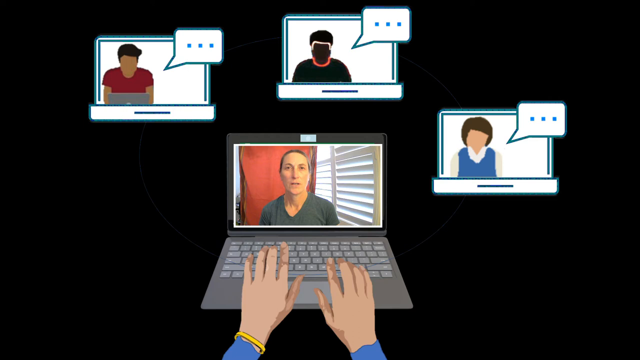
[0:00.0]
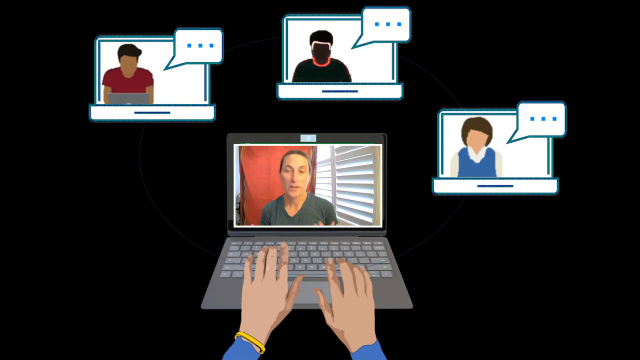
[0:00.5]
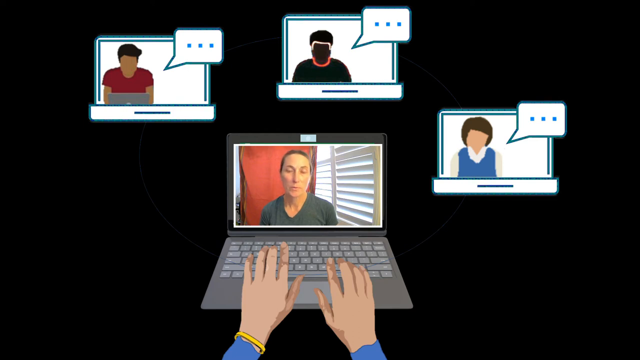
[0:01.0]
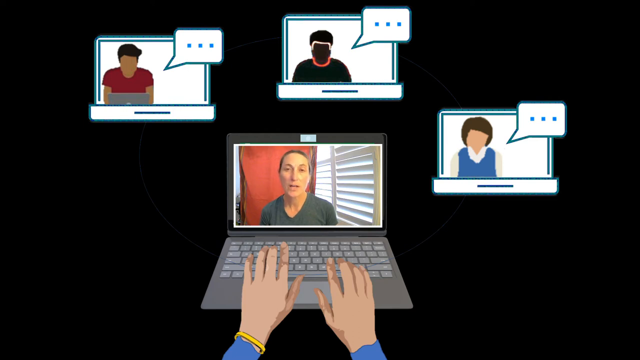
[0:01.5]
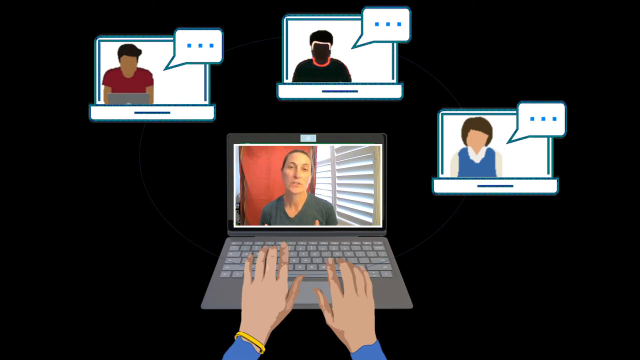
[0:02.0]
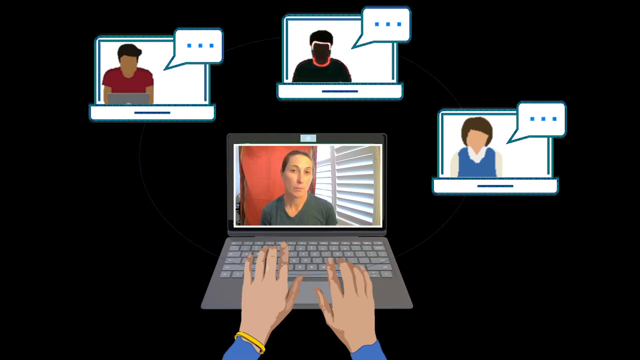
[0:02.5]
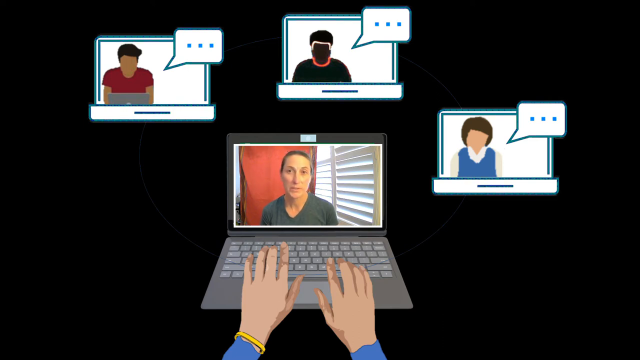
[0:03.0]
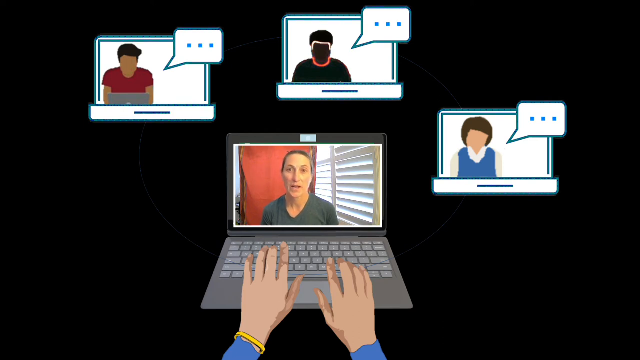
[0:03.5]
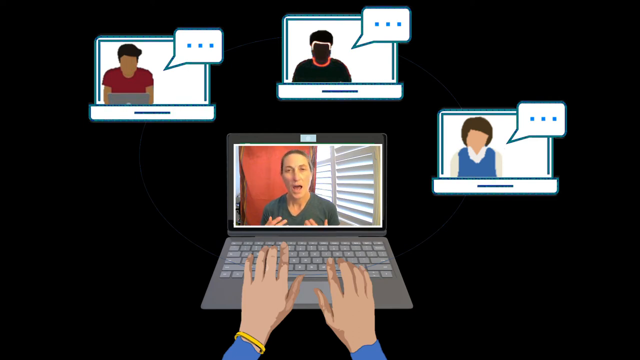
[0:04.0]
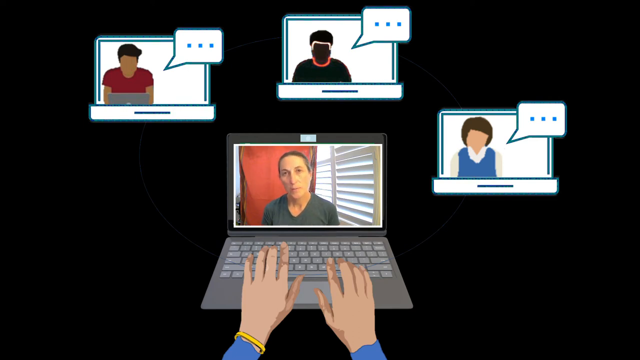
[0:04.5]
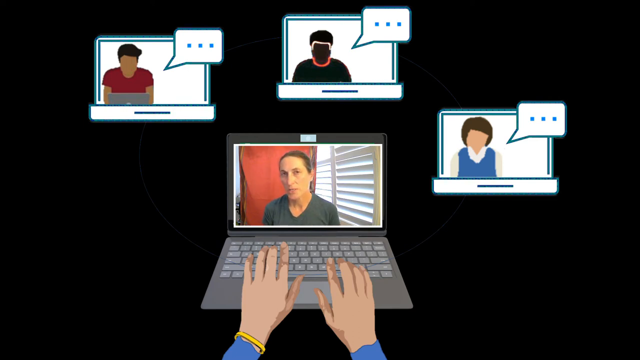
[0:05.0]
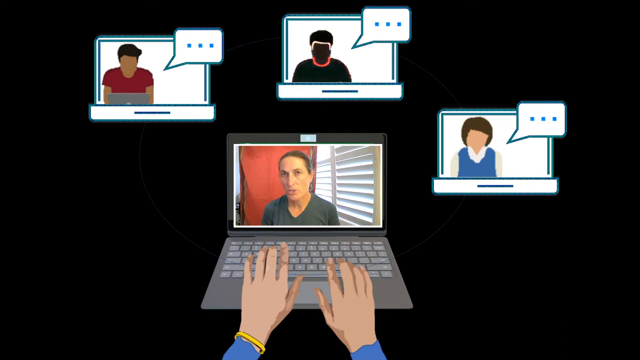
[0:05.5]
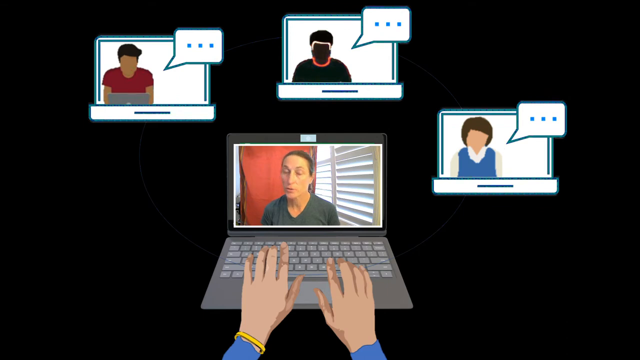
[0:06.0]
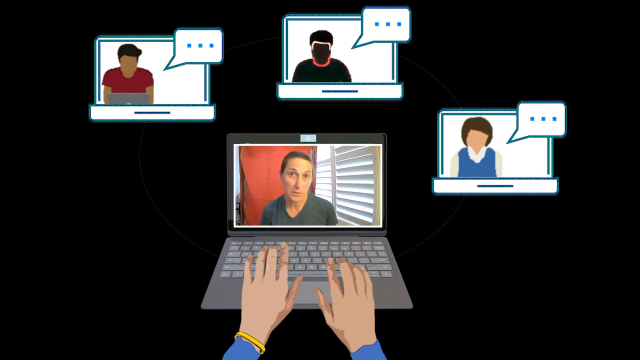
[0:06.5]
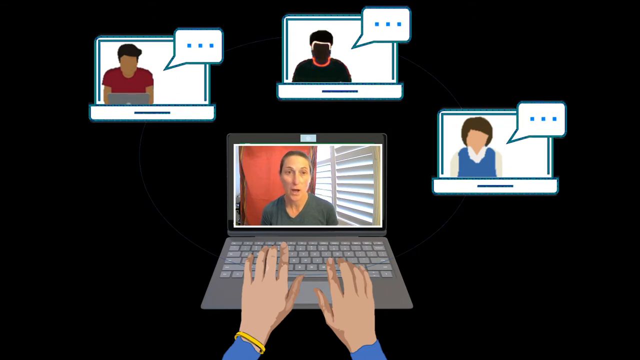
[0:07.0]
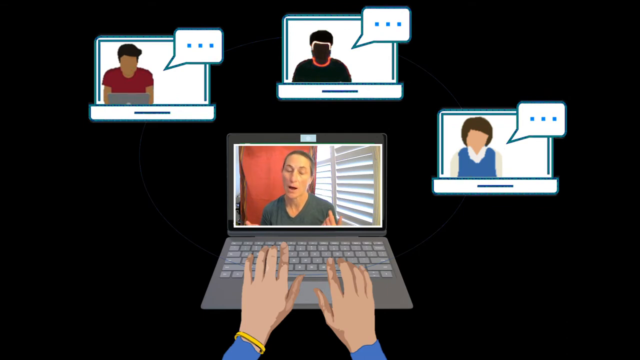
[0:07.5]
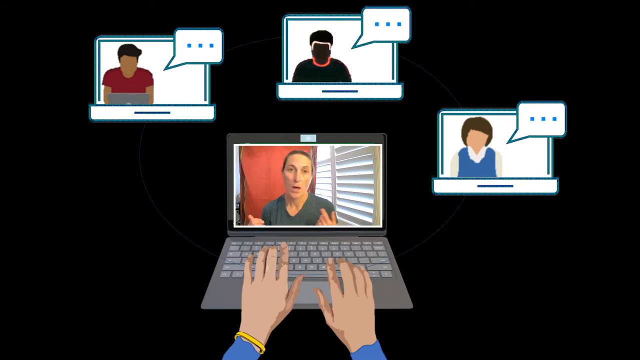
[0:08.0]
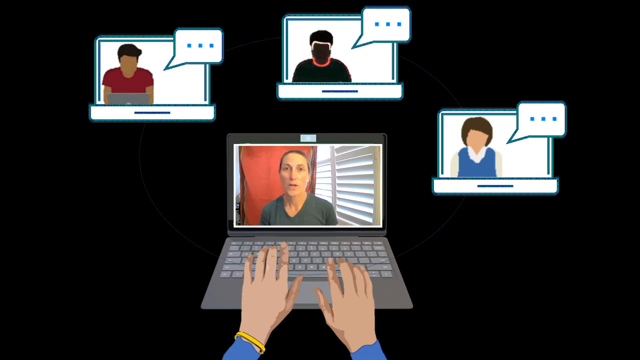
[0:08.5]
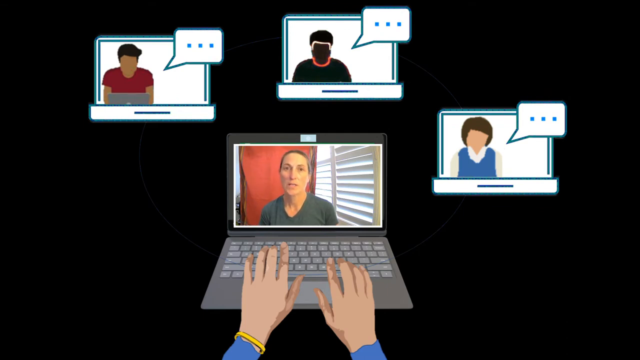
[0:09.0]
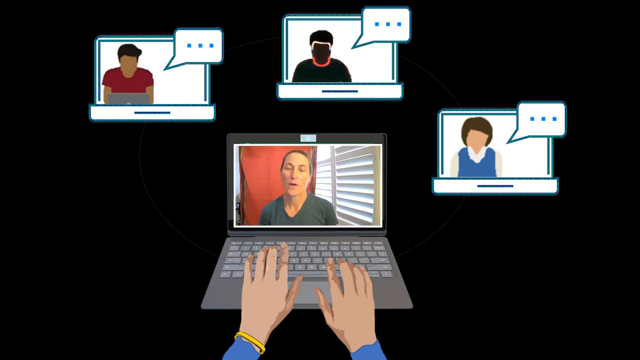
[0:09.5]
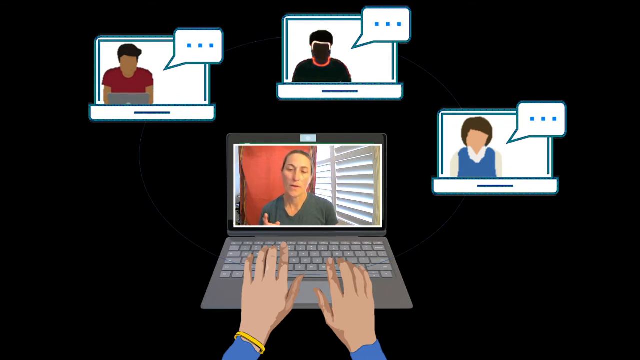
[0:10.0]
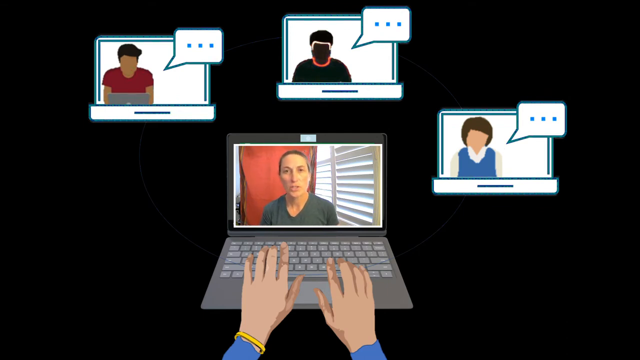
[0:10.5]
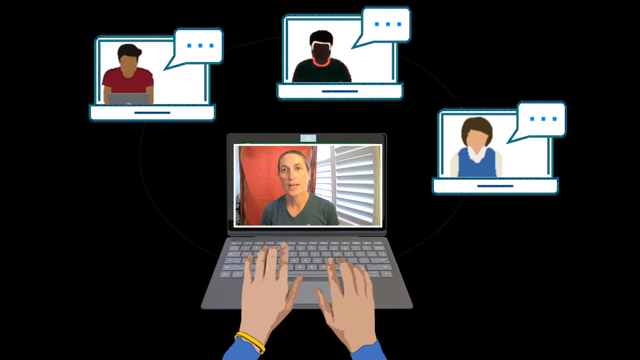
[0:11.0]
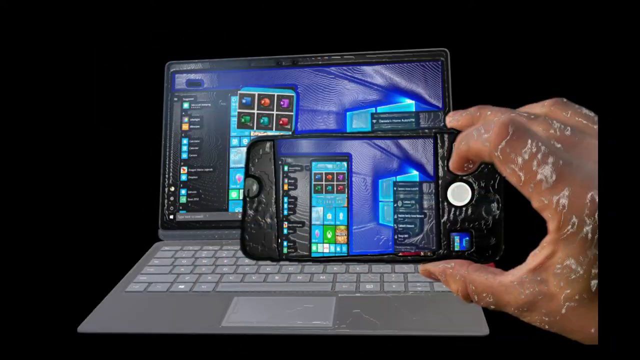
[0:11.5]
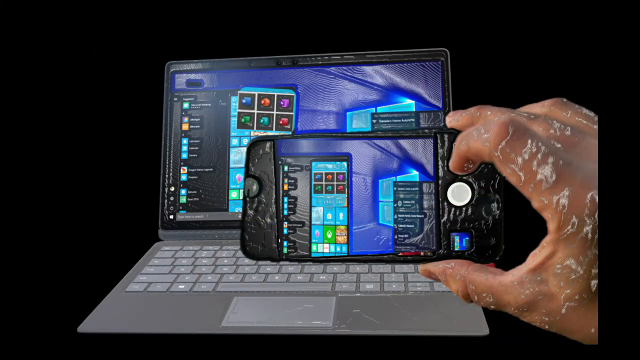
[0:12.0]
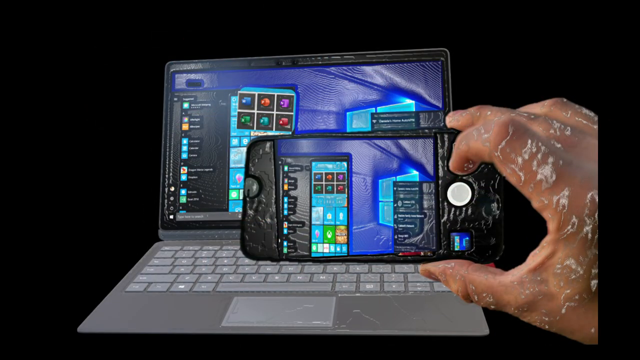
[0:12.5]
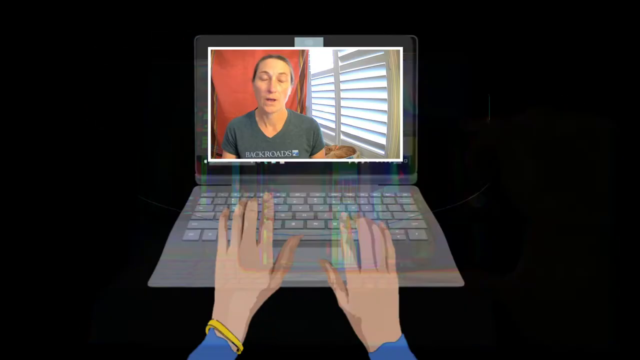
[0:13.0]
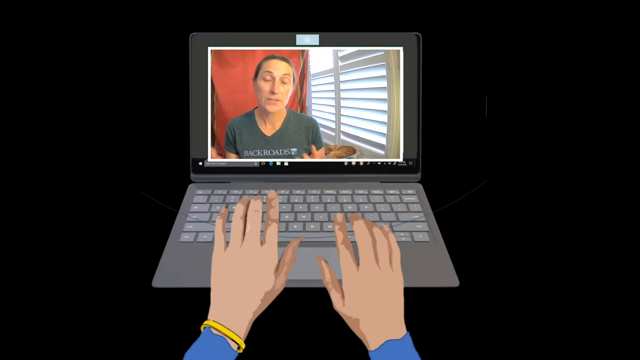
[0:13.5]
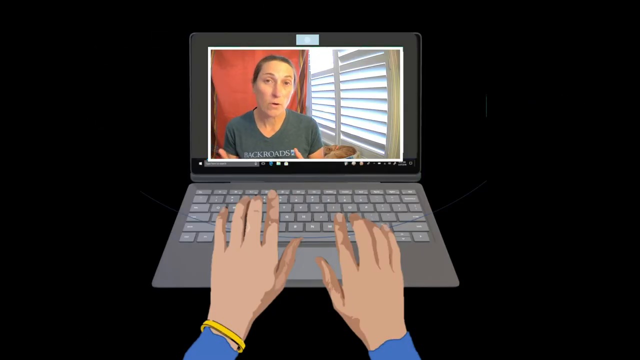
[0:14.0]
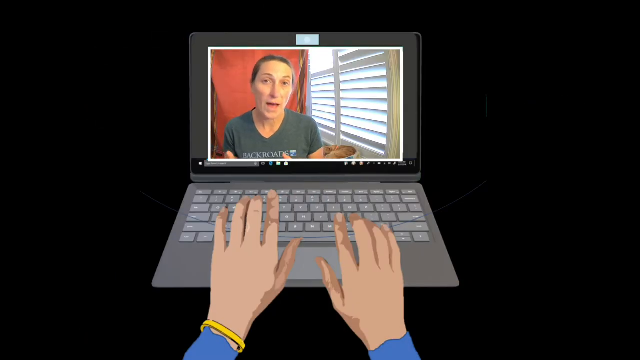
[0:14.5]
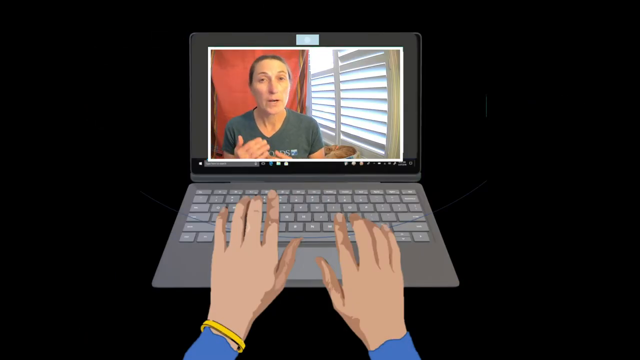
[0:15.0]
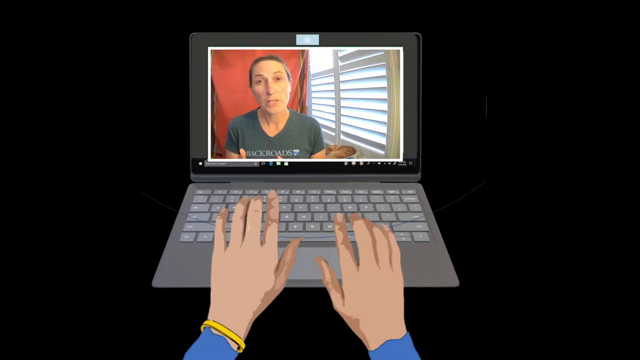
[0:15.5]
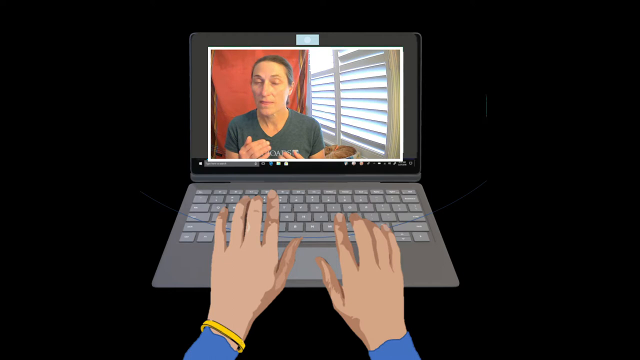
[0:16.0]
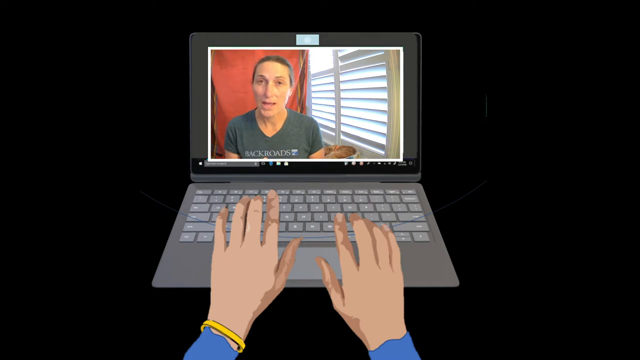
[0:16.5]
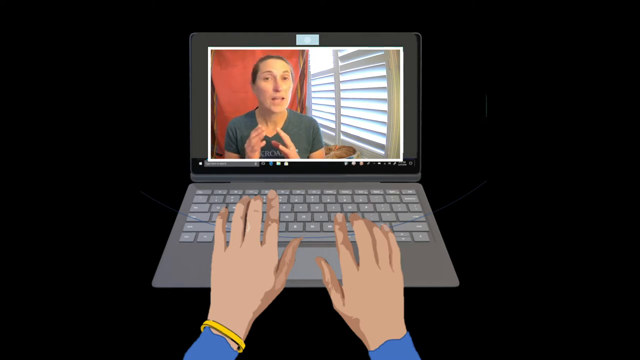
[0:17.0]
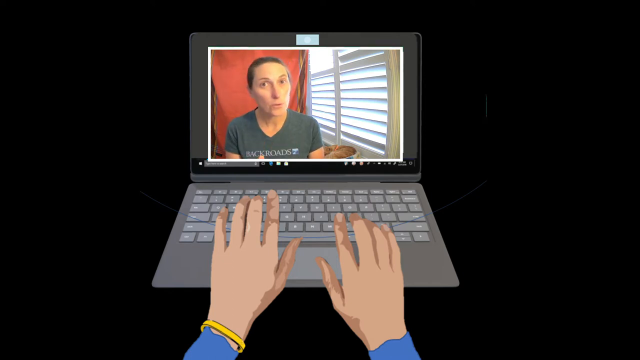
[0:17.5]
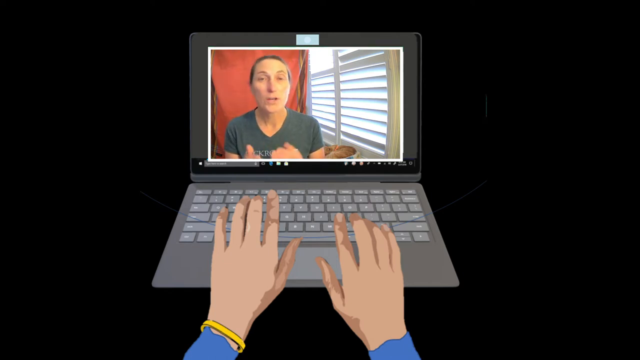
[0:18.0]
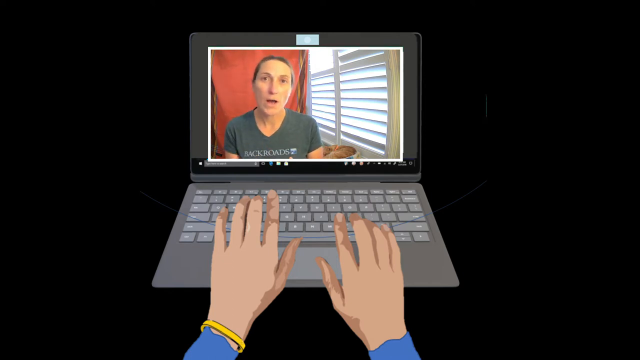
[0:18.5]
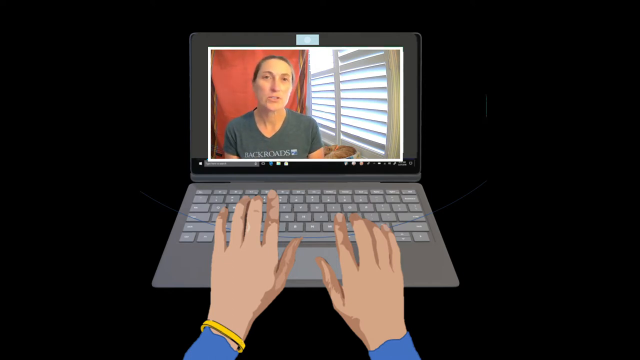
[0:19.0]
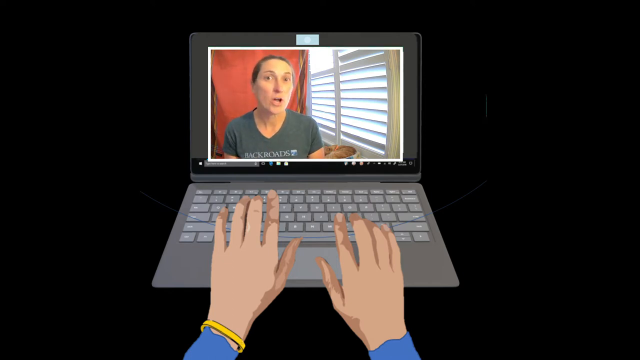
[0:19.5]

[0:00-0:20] After a black screen, three digital images of a computer appear, each with a different type of person on the left side of the screen and a small dialogue-like box popping up on the right side. The bottom one shows a digital computer and digital hands as if typing, but a real woman is on the screen, talking behind a window against a red backdrop. She looks to be maybe in her 50s, wears a gray shirt, and her hair is completely pulled back. The scene then switches to a computer and a phone, with a person's hand holding the phone between two fingers while the pointer finger taps the button. Something is going on in which everything almost looks like it is melting.